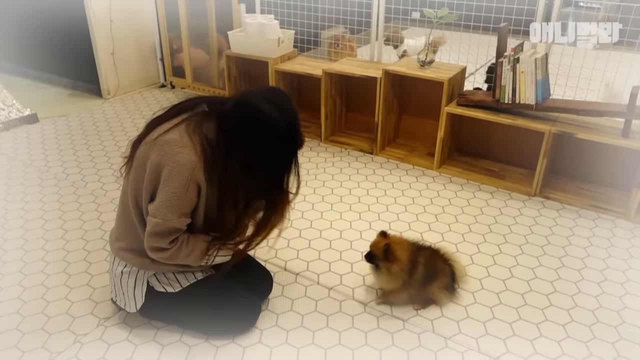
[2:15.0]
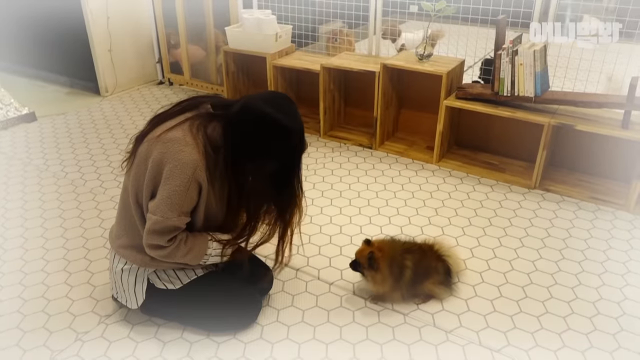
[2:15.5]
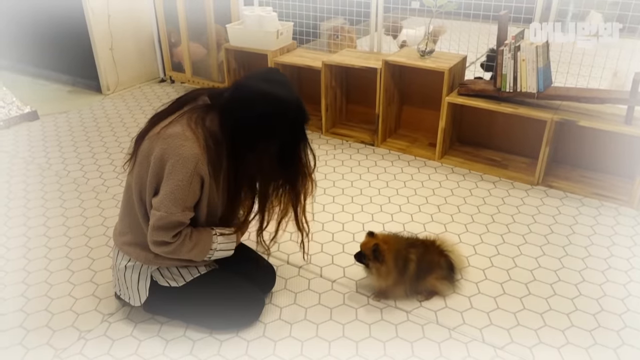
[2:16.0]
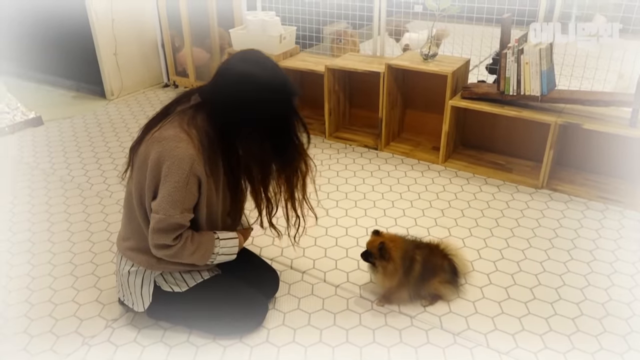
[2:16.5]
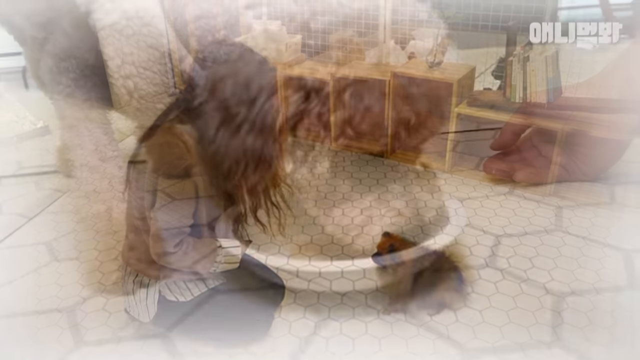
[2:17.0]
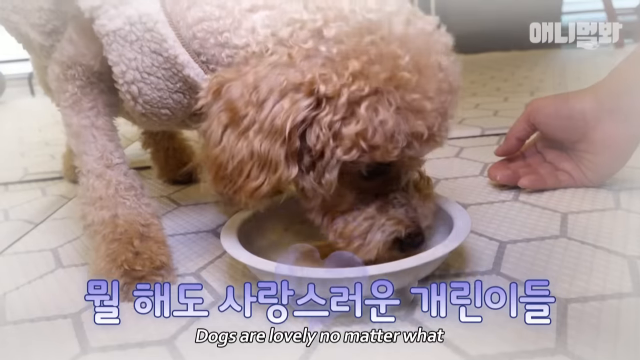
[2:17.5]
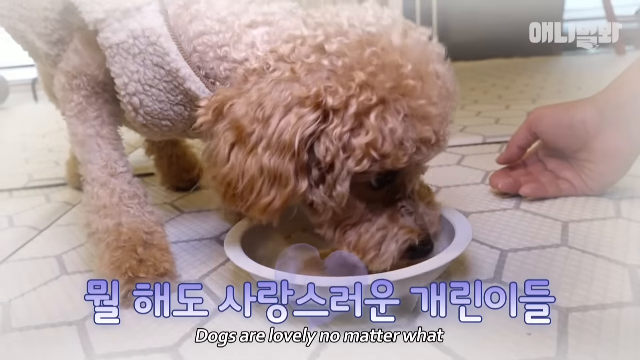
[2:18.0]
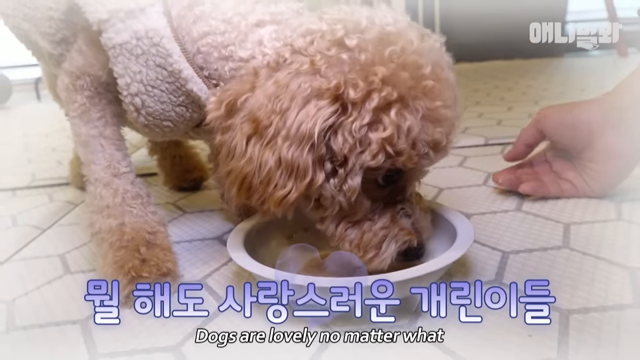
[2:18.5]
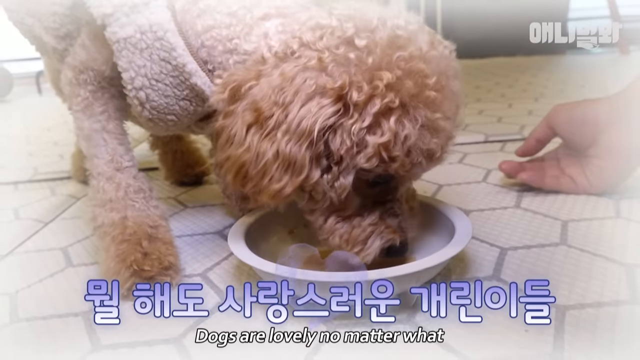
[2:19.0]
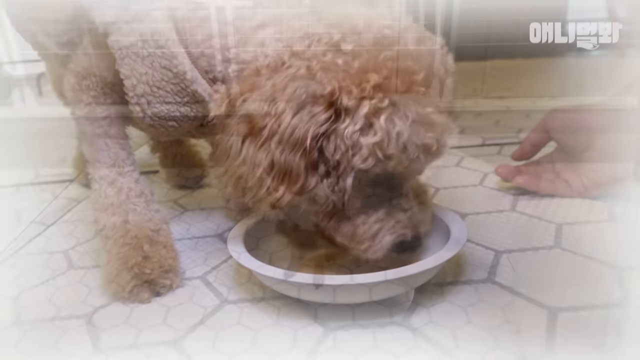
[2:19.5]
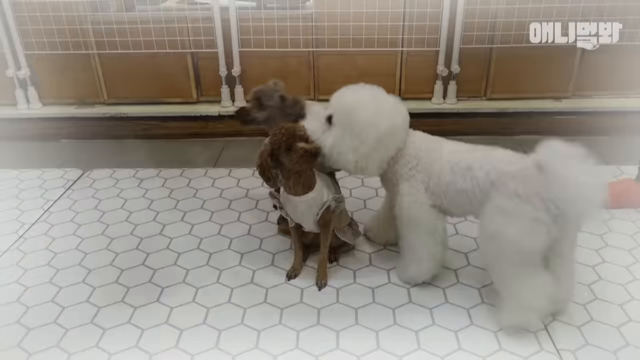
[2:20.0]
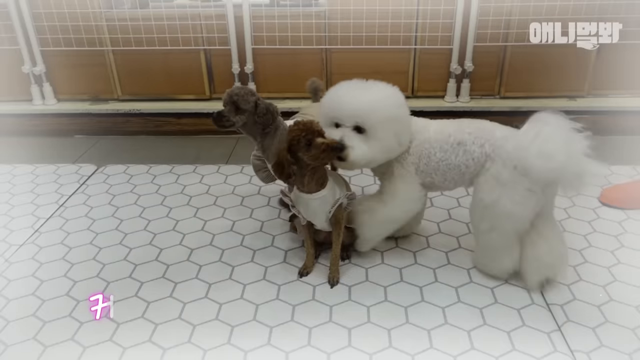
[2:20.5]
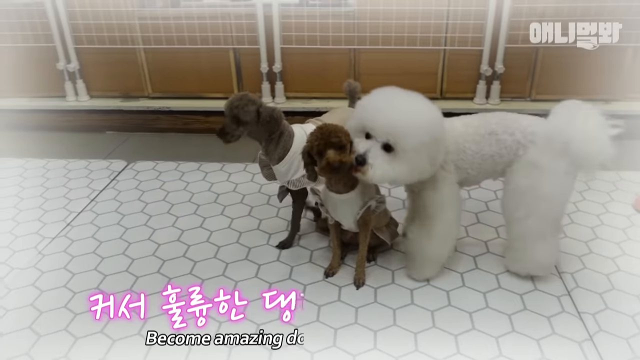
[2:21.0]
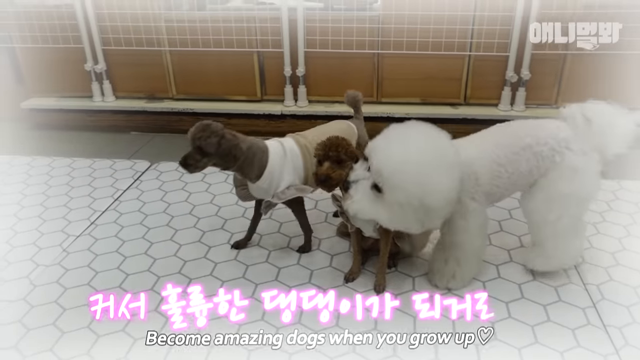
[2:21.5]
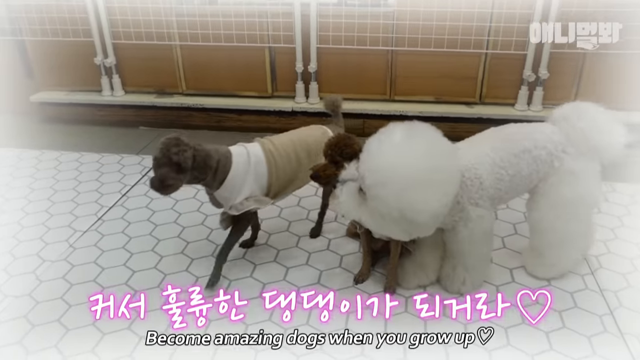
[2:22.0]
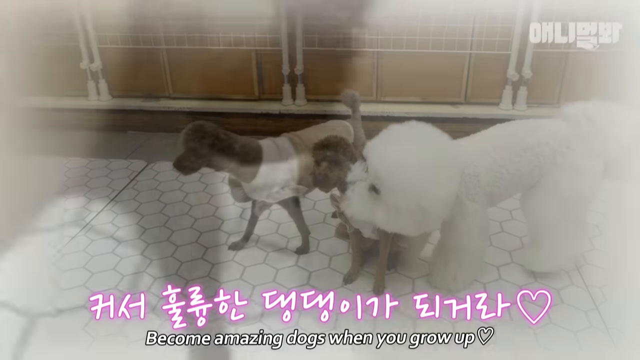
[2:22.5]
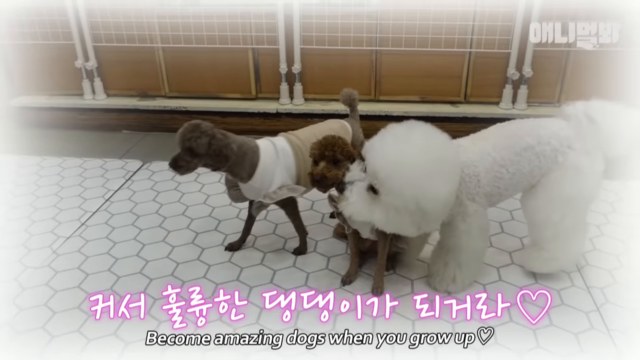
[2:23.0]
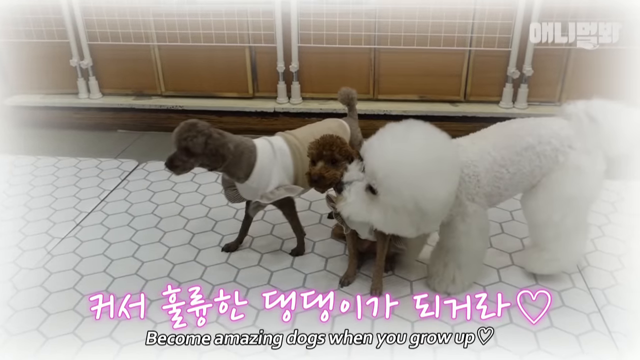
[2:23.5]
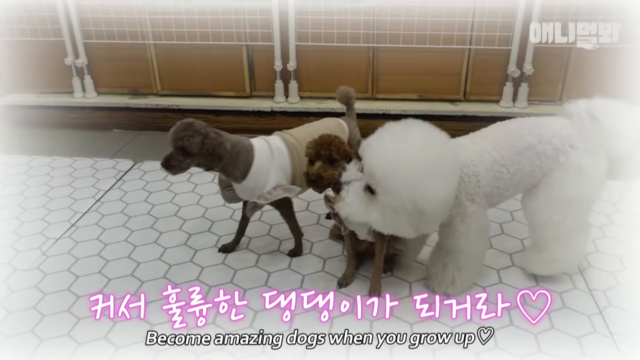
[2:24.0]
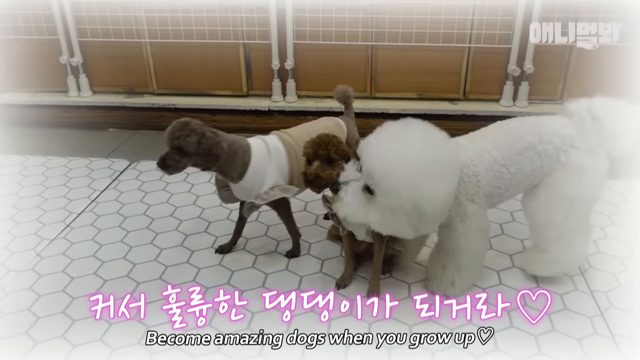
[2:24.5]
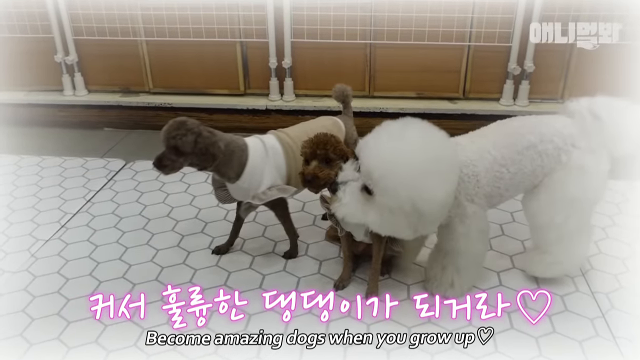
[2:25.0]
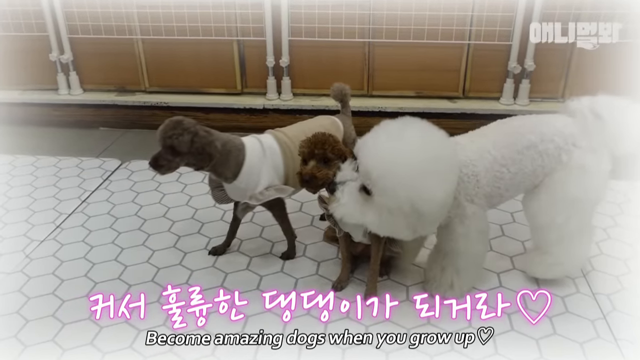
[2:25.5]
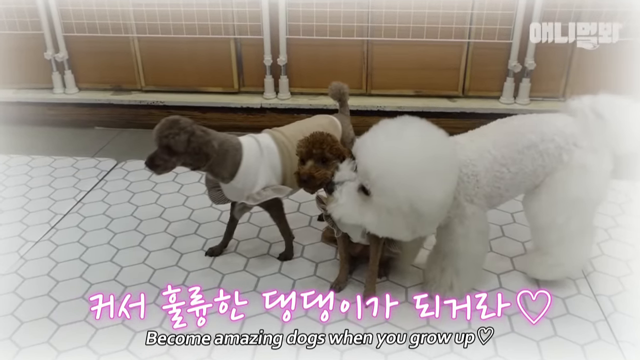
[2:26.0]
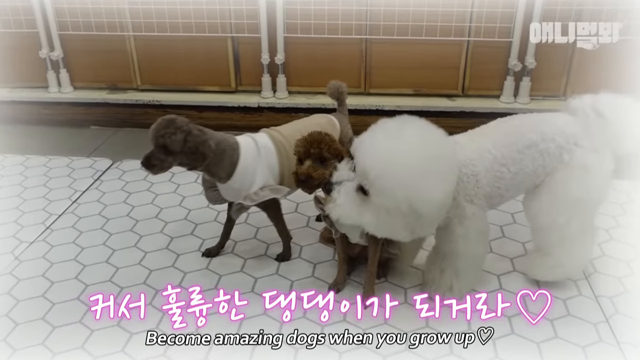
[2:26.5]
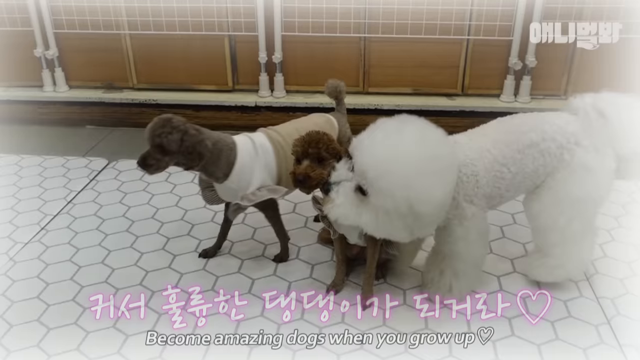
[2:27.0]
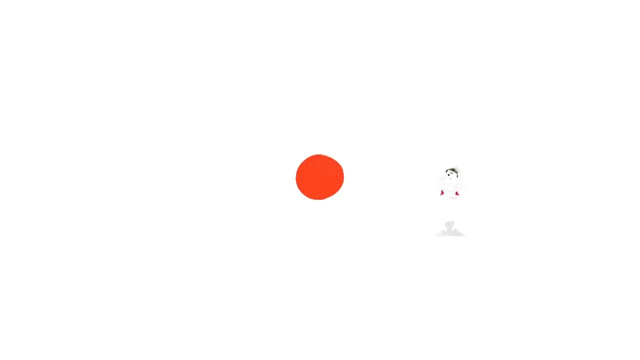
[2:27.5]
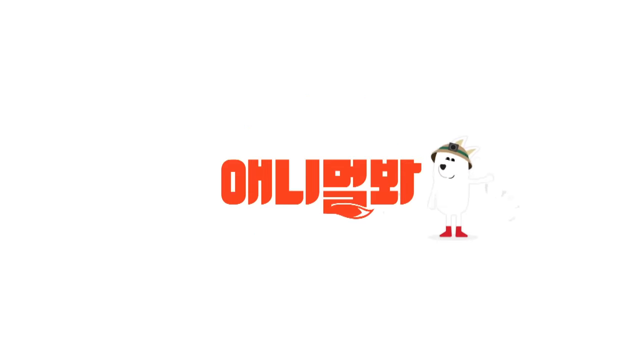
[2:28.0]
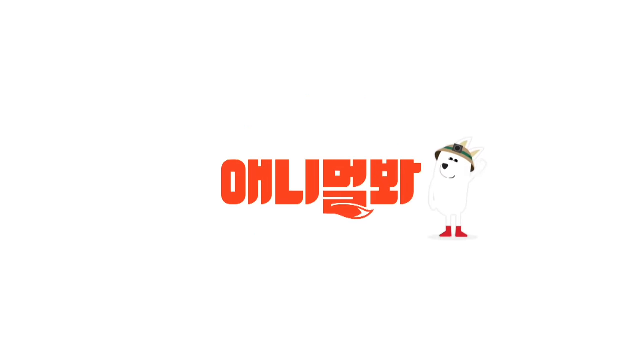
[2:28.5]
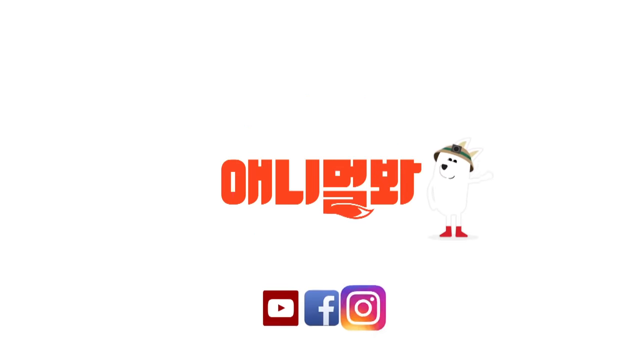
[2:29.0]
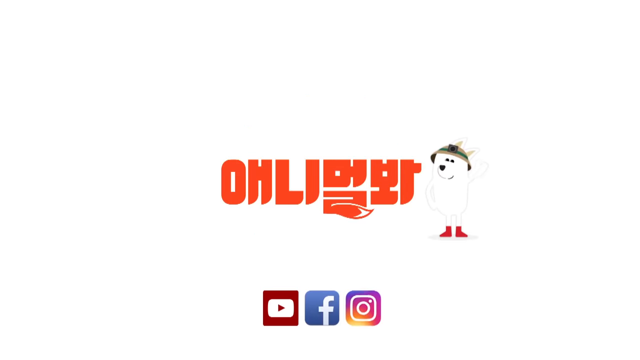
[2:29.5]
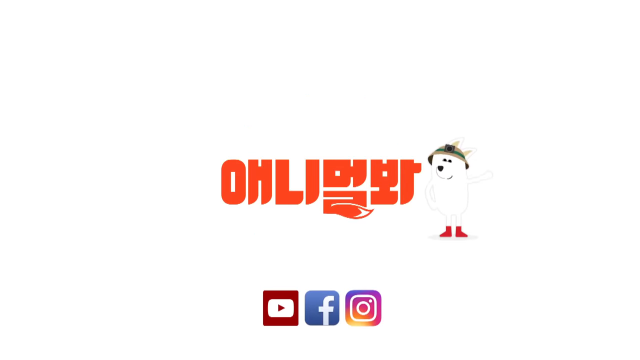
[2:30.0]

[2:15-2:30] A woman bows and a little brown dog bows back. A white fluffy dog and a couple of brown furry dogs appear; both small brown dogs wear some kind of white and brown sweater. Brown shelves are in the back, and there appears to be a clear divider with some other dogs in another room. The white fluffy dog is trimmed except for its head, which is very puffy like a cotton ball. A brown dog in a sweater eats out of a bowl, apparently some kind of brown kibble. The caption says "become amazing dogs when you grow up." An orange logo appears, followed by YouTube, Facebook, and Instagram.